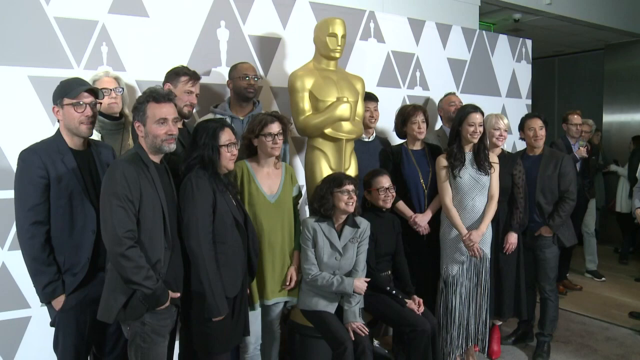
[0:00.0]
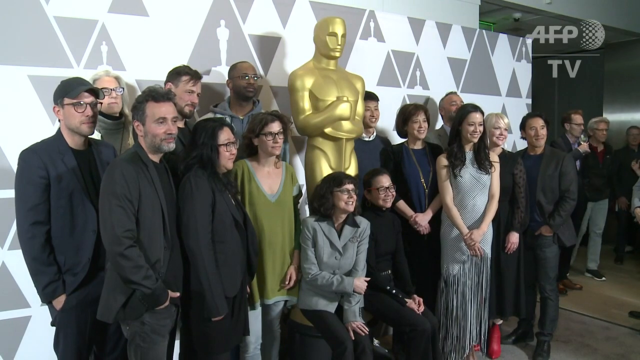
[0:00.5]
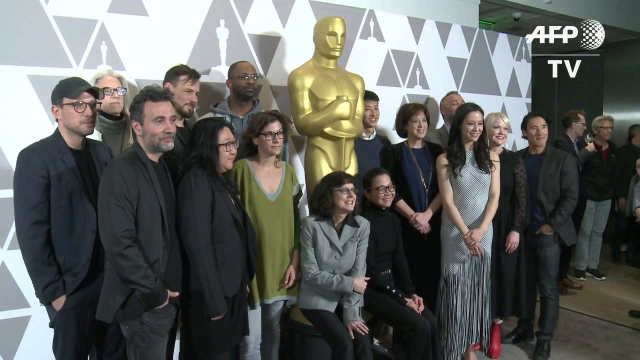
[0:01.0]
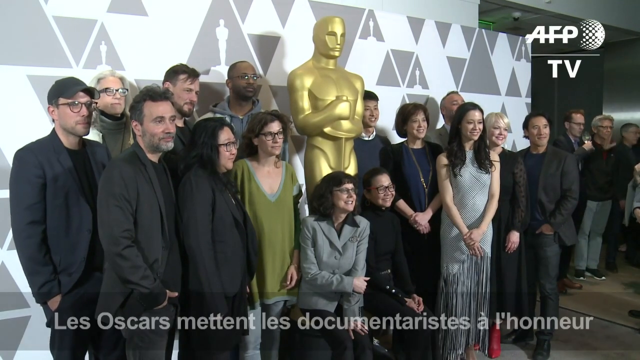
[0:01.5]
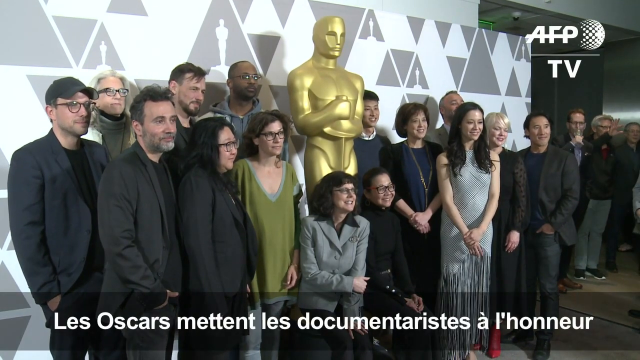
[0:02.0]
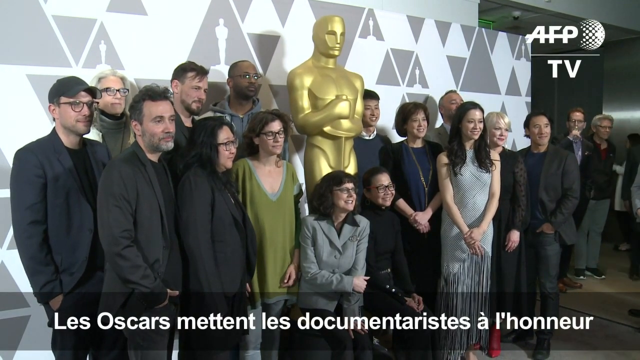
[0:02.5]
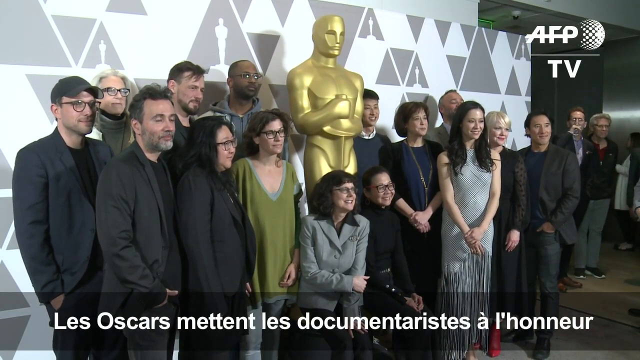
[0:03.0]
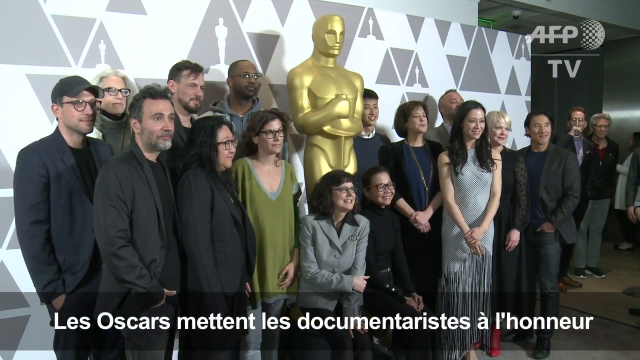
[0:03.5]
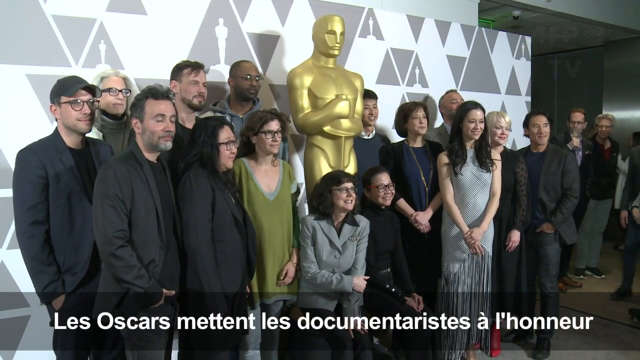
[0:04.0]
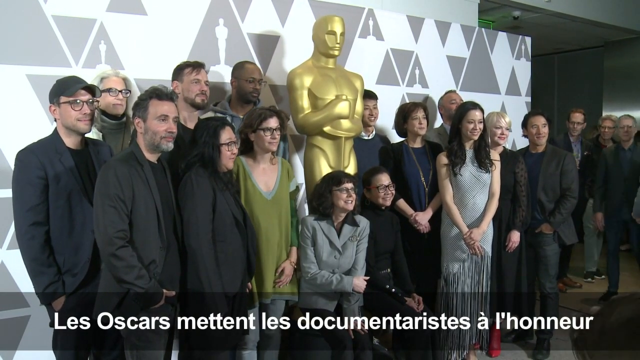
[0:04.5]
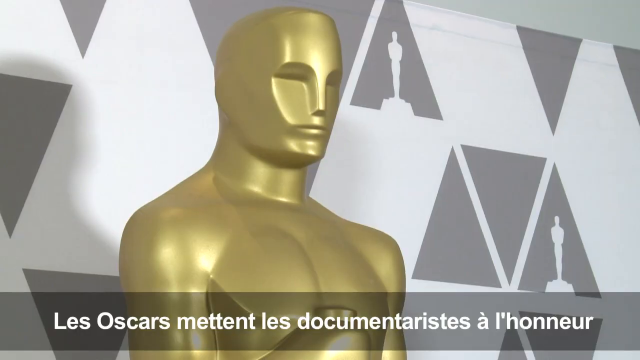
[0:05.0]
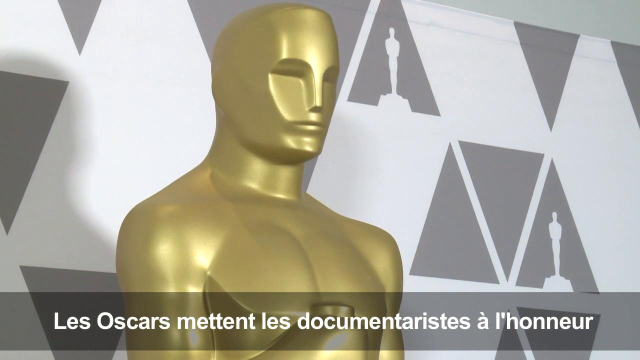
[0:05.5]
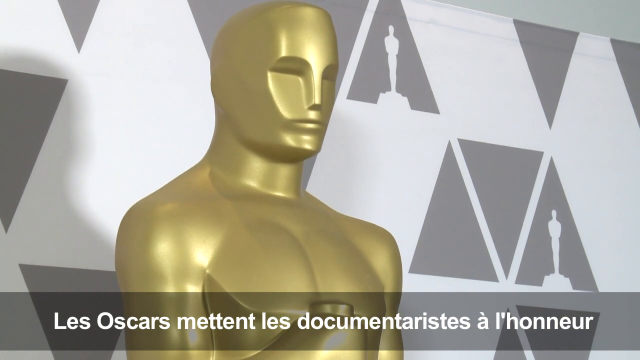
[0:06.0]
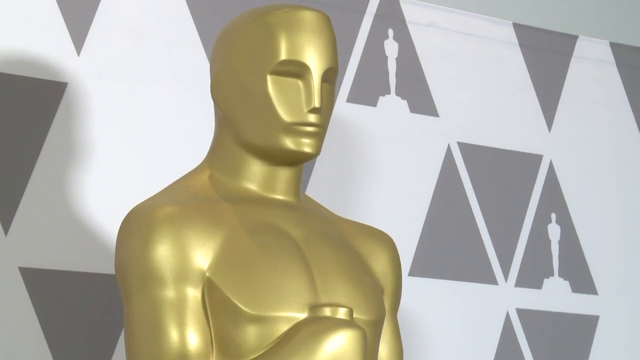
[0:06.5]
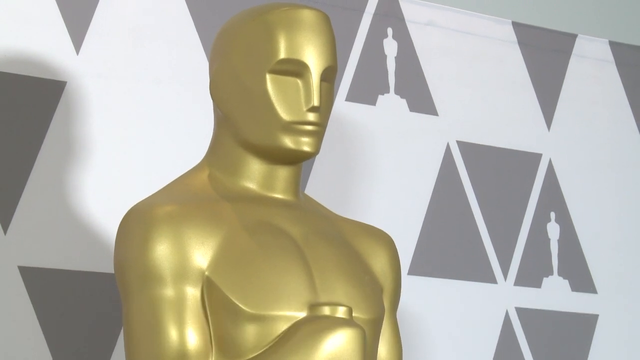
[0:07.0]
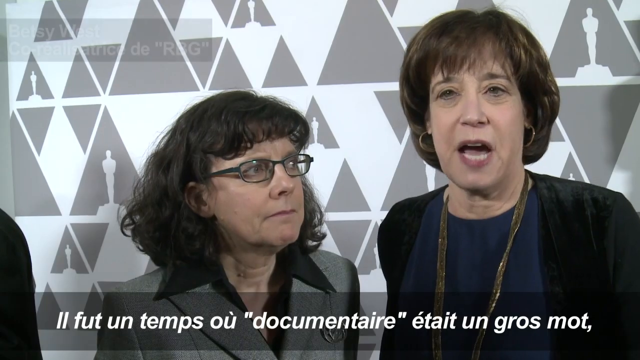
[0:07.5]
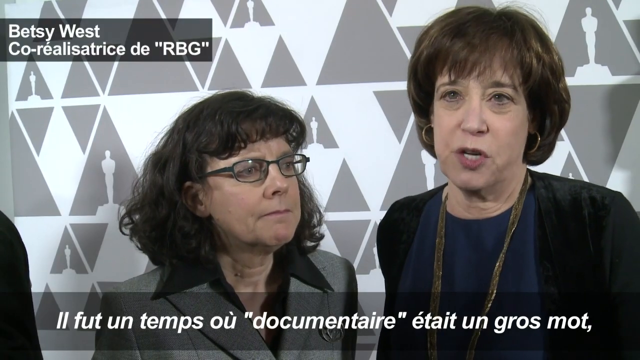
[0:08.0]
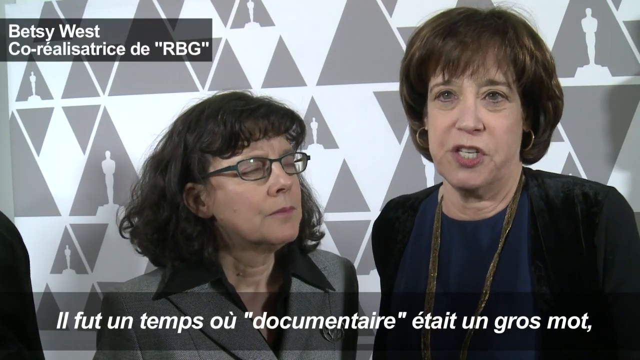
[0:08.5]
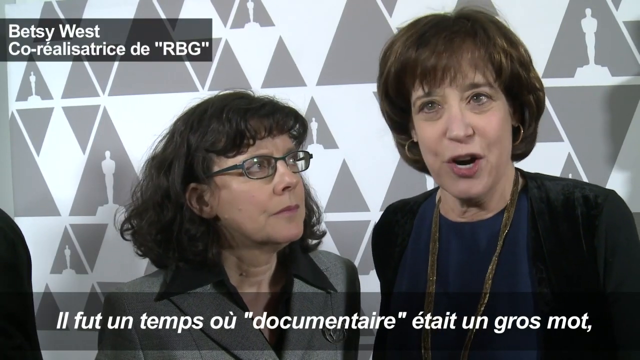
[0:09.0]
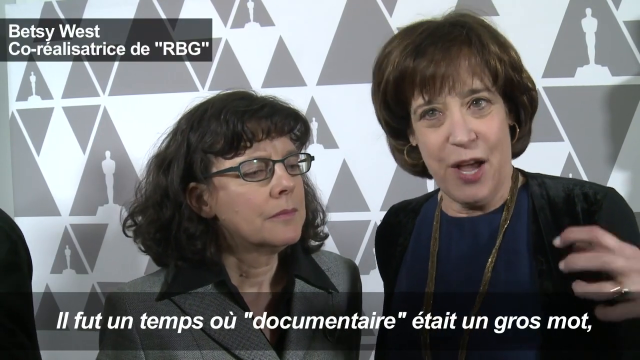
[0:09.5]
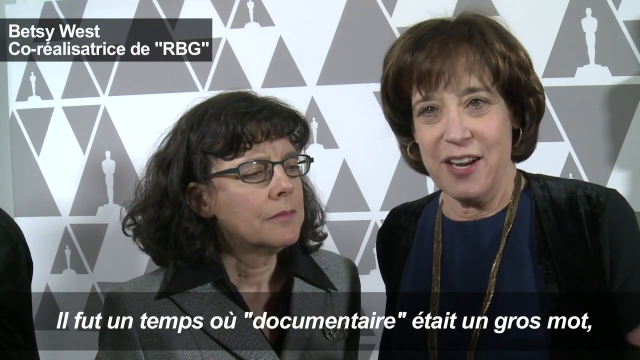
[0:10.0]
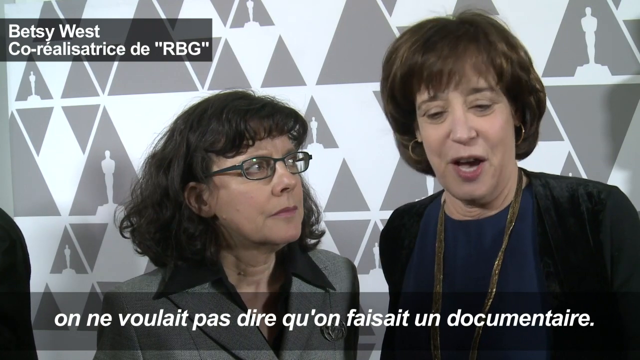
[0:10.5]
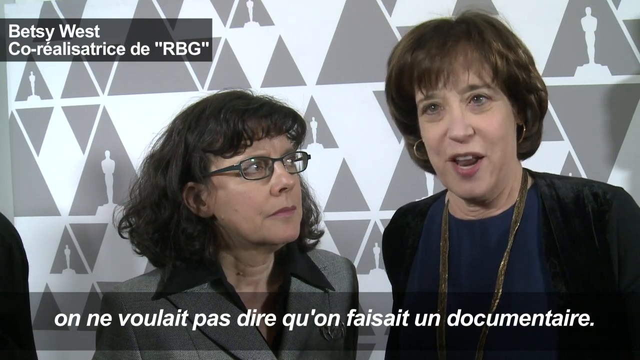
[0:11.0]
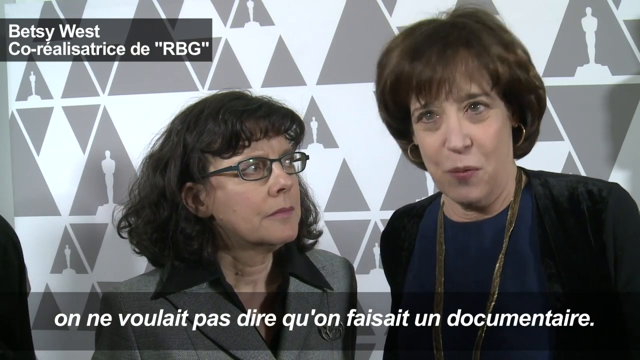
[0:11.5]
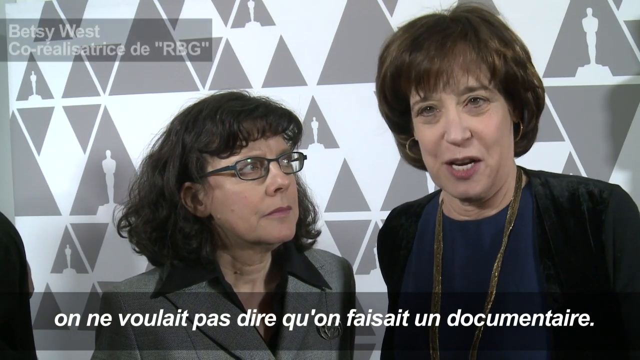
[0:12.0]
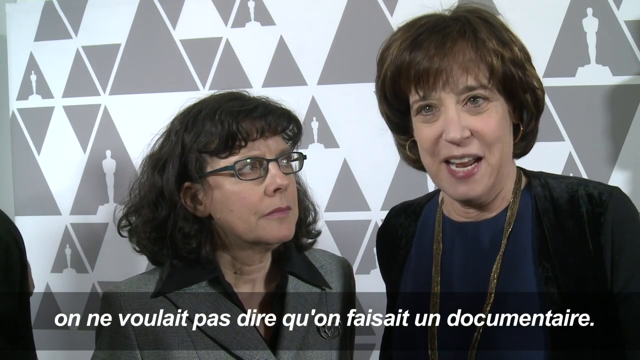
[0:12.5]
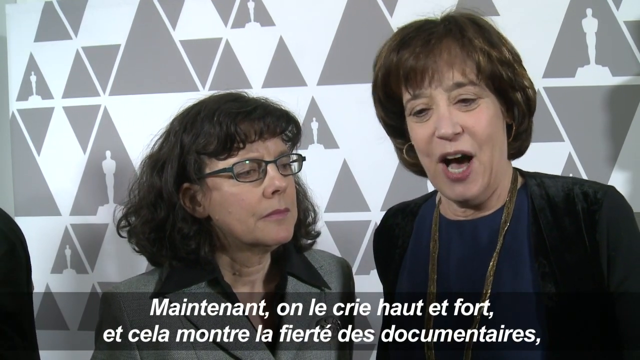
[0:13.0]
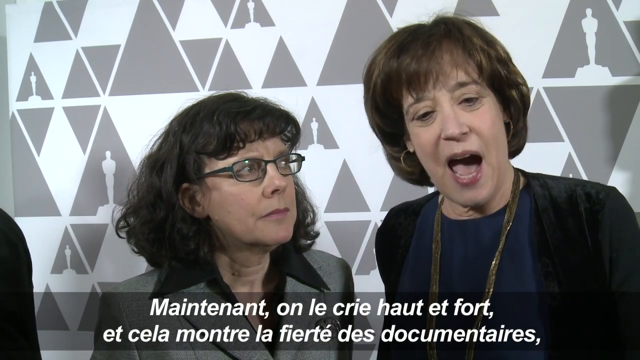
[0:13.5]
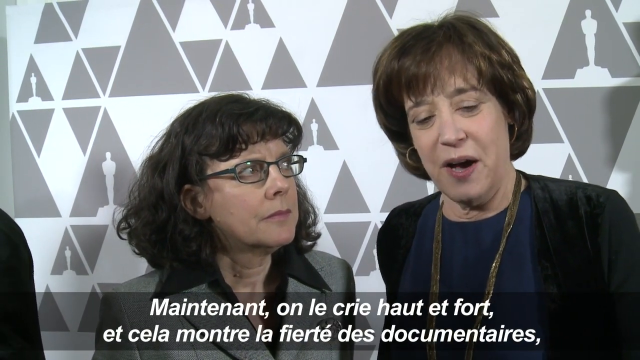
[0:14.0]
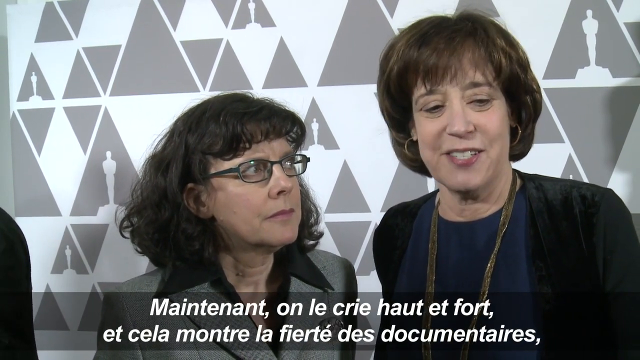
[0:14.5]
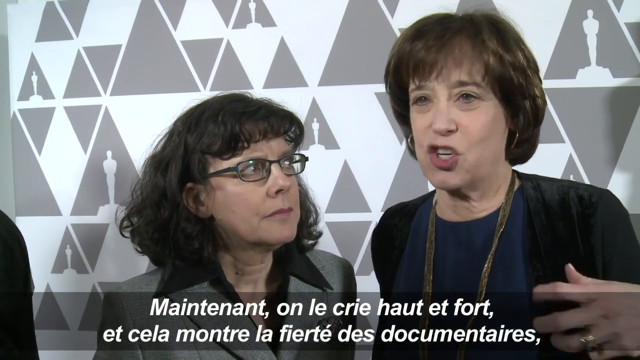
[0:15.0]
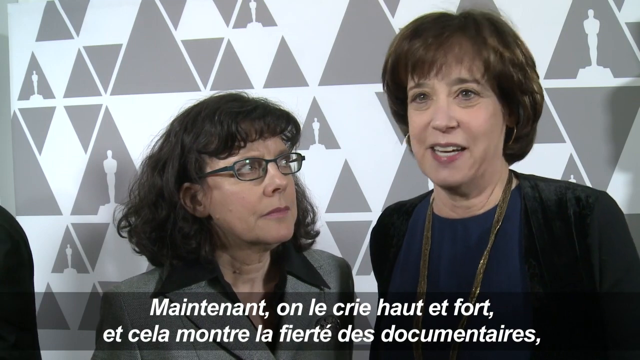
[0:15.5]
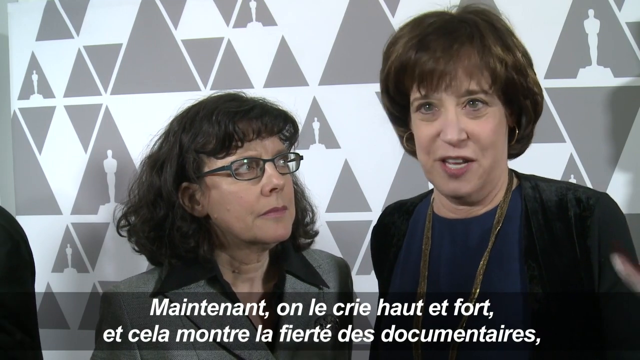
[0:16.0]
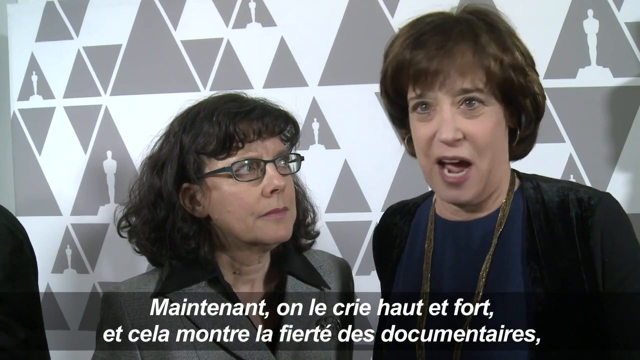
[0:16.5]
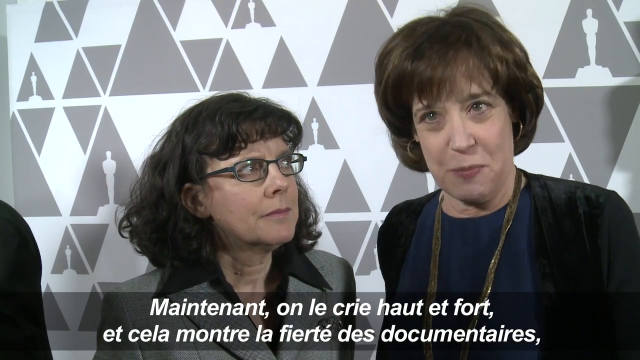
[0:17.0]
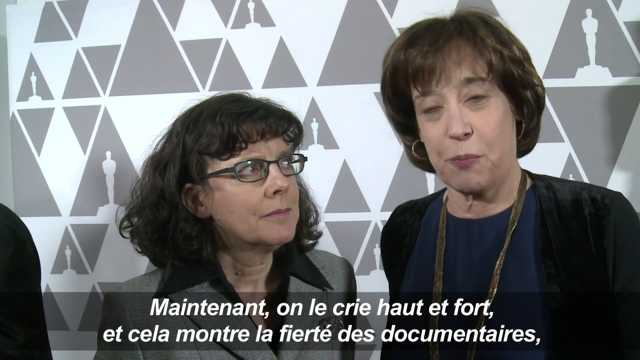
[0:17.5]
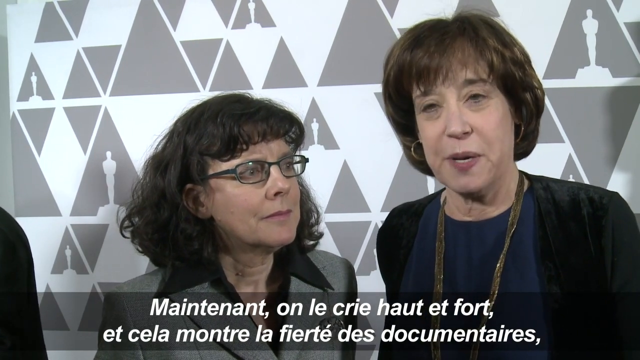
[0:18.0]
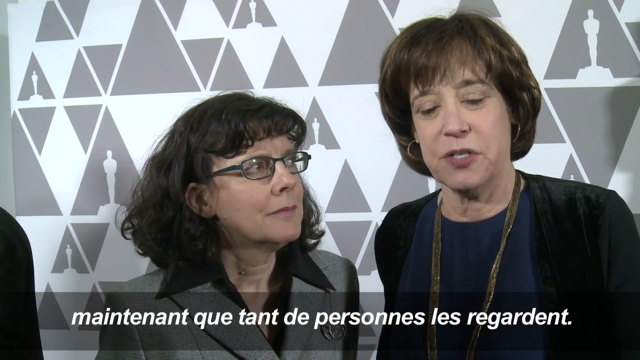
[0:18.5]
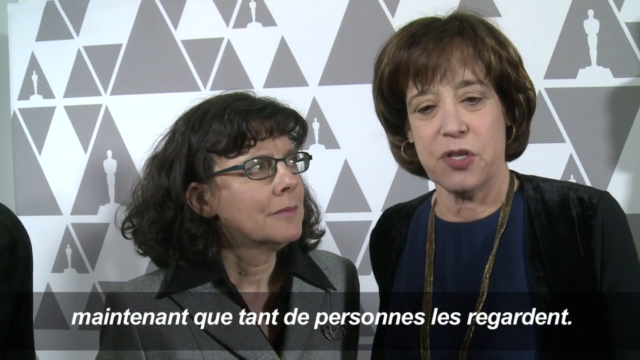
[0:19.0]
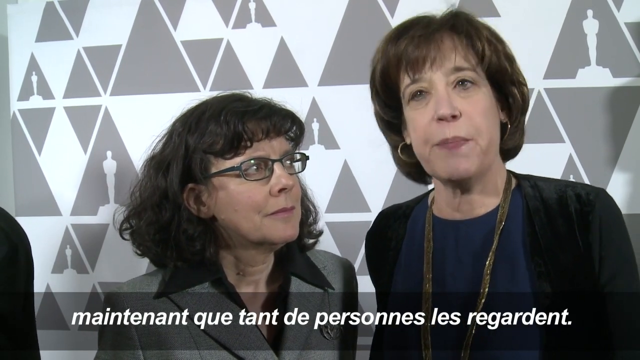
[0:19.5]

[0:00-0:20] A group of about 15 people stands in front of a specific wall that has been put up for the Oscars and possible nominations. In the middle of the group is a giant musketeer statue, and everyone stands around it for a group photo, all smiling. French subtitles then appear at the bottom. The camera briefly focuses on the statue before focusing on Betsy West and Julie Cohen as they are asked questions and answer them. Betsy talks a lot, using her hands. She wears a black silky coat with a blue shirt underneath, hoop earrings and a necklace. Julie Cohen just looks surprised; she wears glasses, a grey coat and a black shirt, and no jewelry.